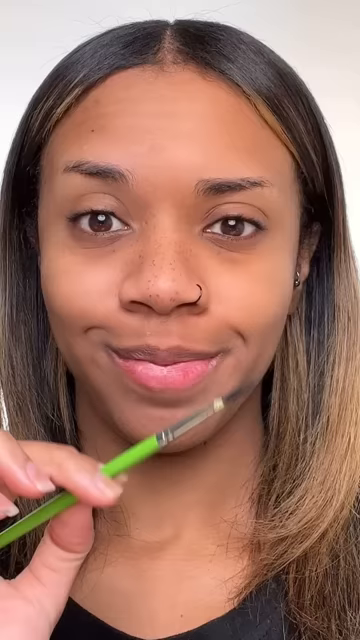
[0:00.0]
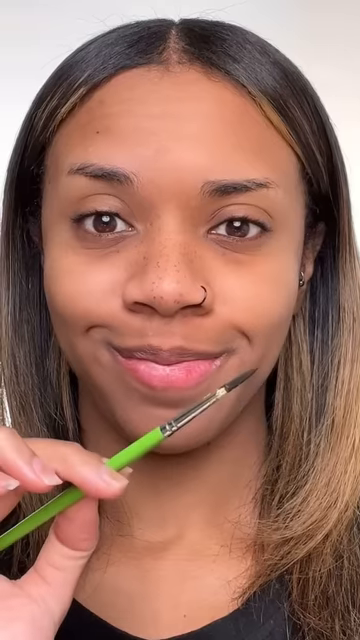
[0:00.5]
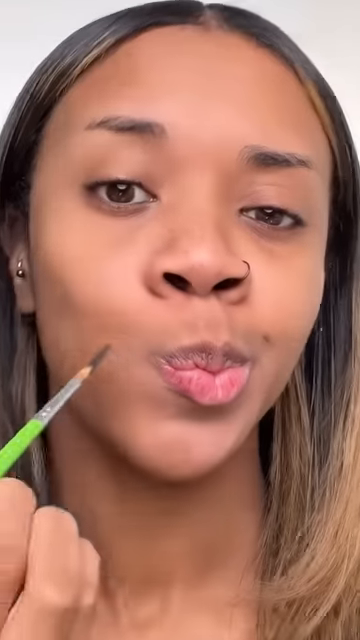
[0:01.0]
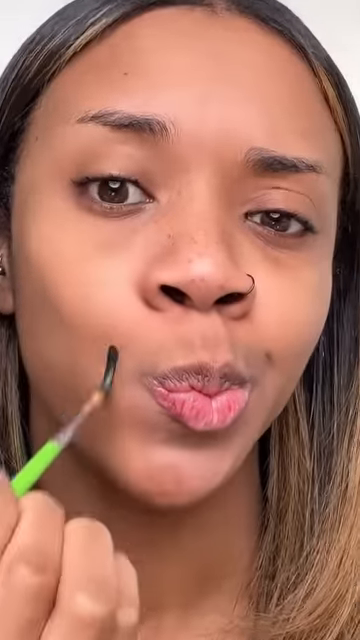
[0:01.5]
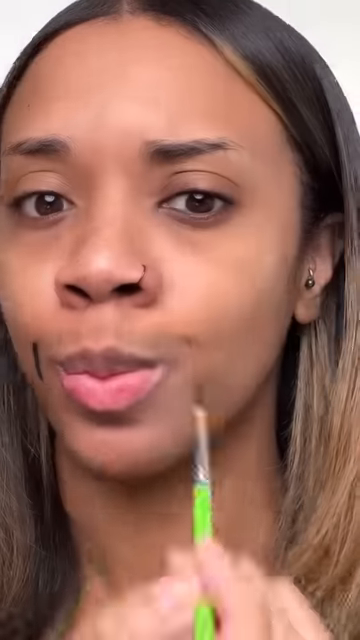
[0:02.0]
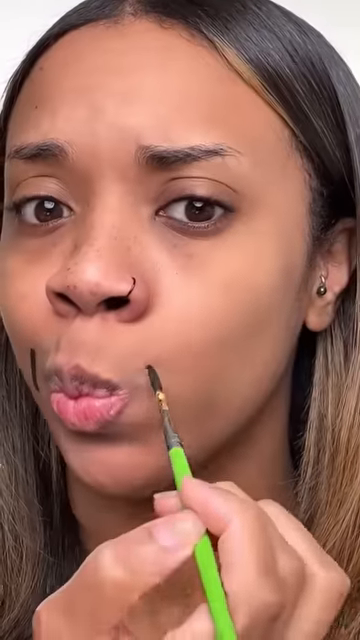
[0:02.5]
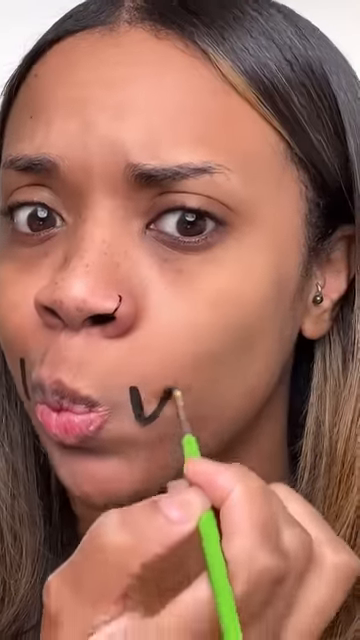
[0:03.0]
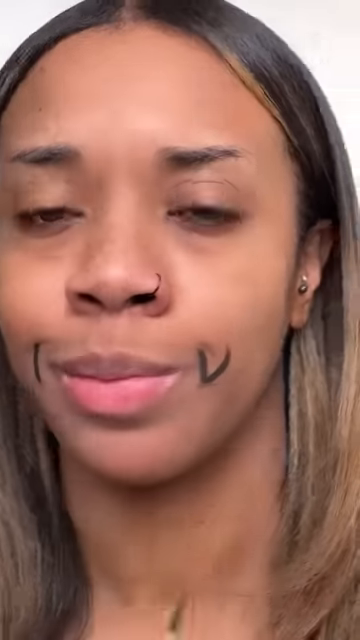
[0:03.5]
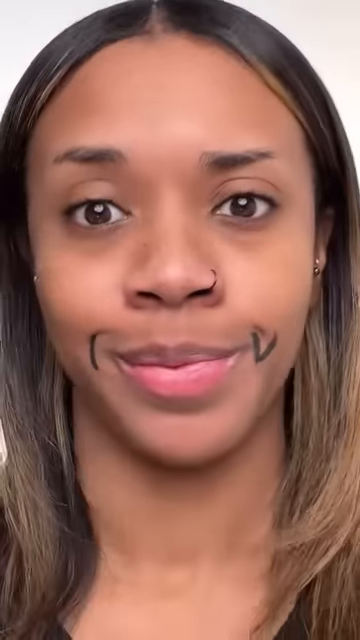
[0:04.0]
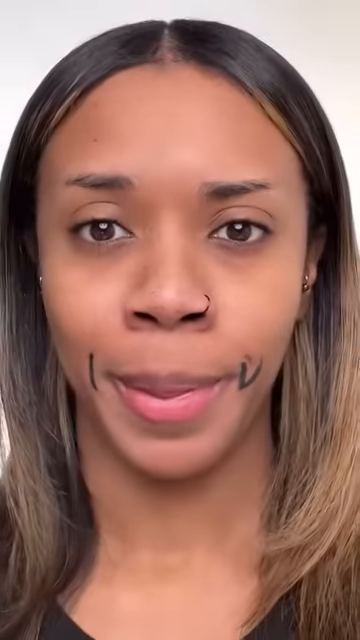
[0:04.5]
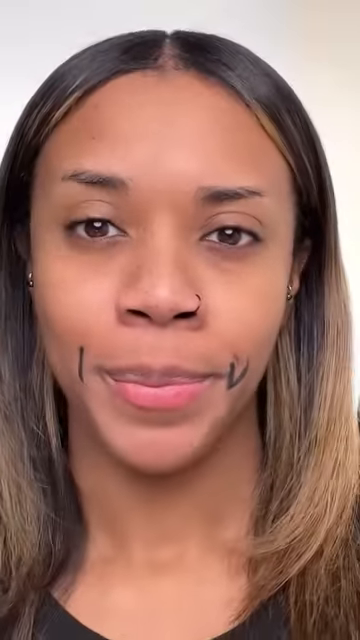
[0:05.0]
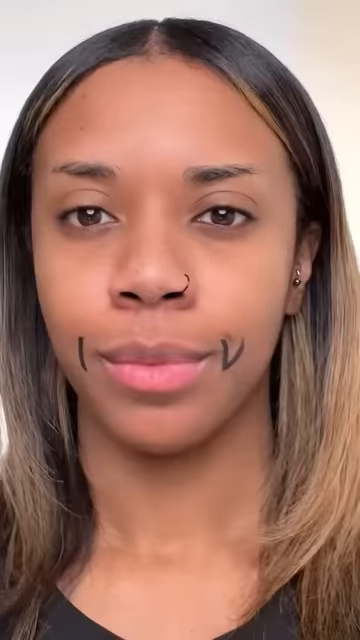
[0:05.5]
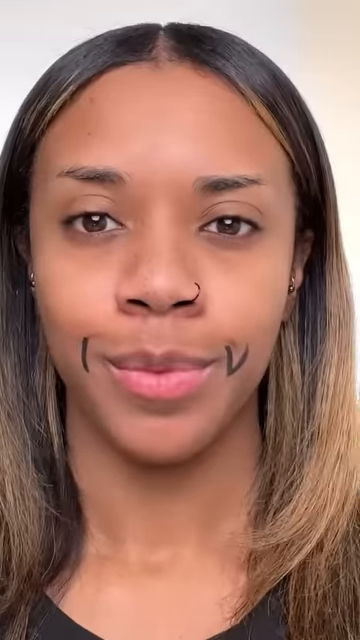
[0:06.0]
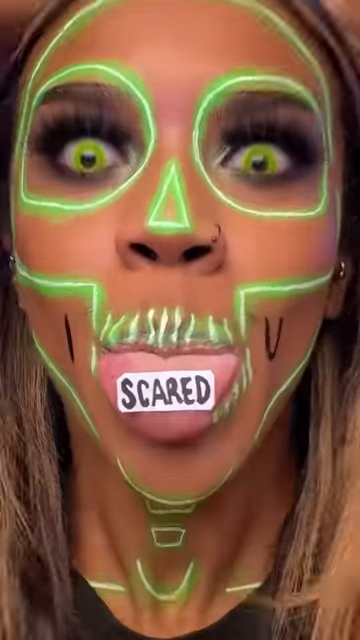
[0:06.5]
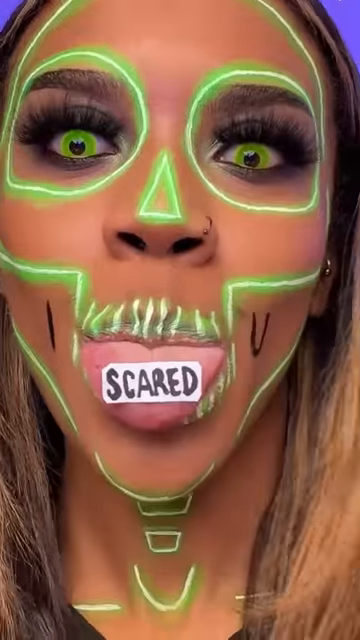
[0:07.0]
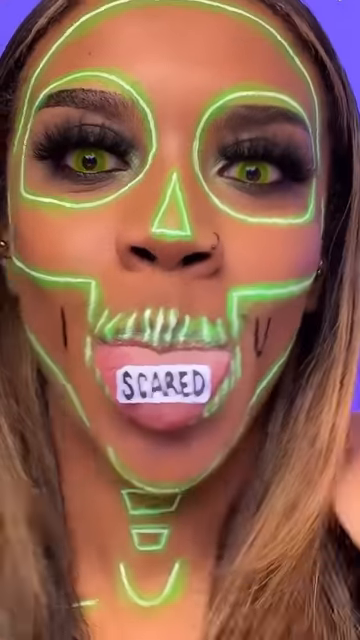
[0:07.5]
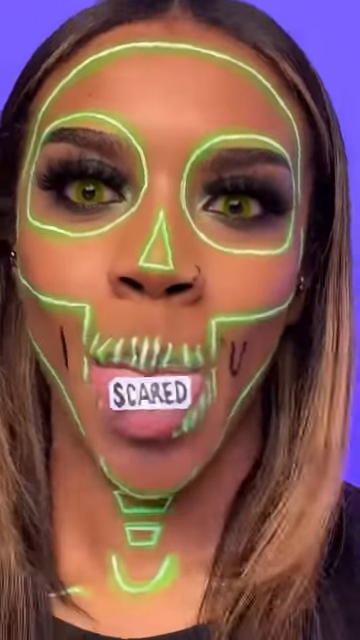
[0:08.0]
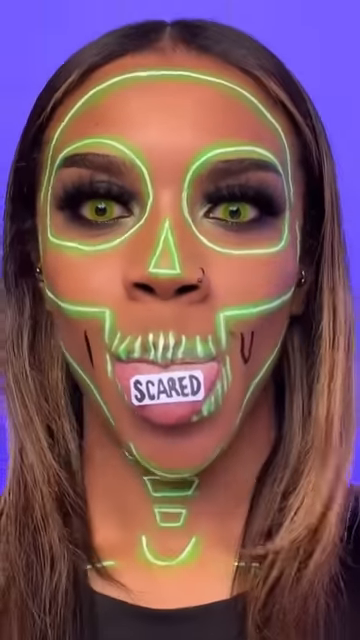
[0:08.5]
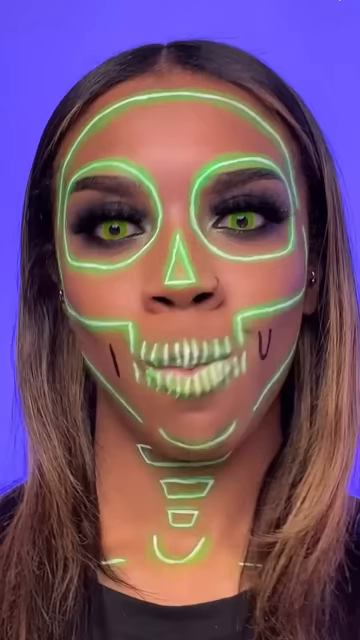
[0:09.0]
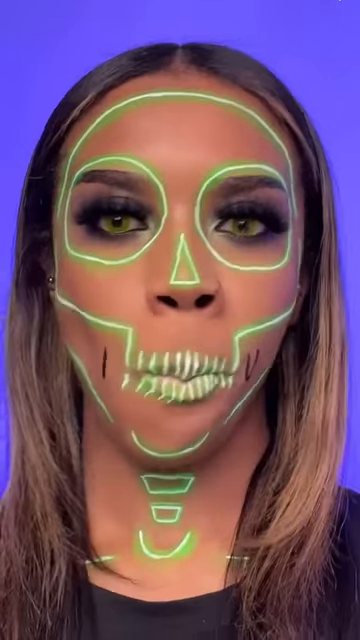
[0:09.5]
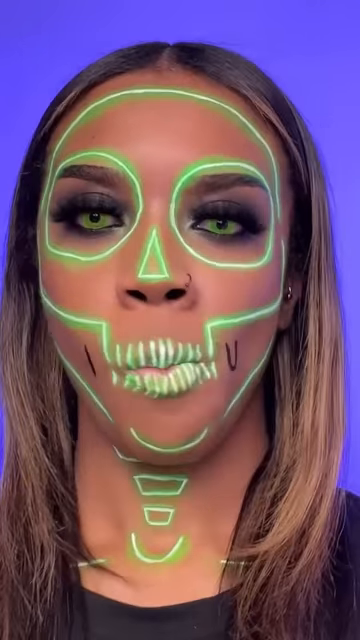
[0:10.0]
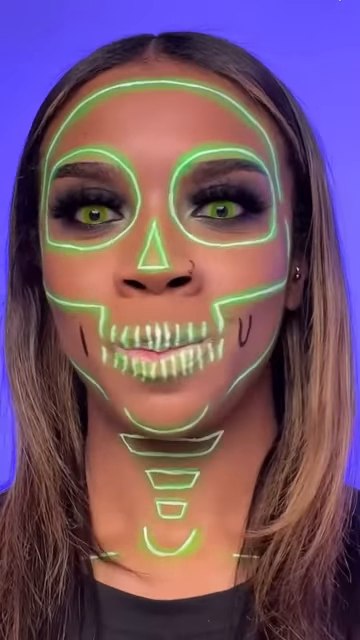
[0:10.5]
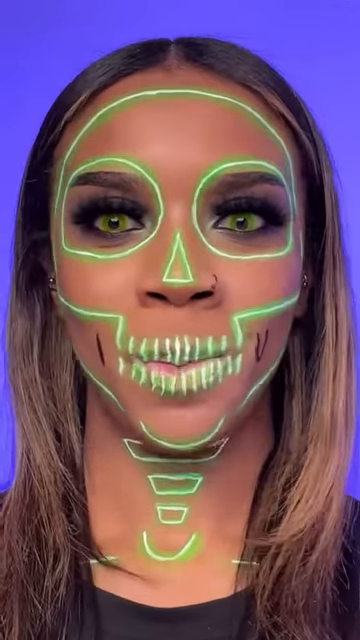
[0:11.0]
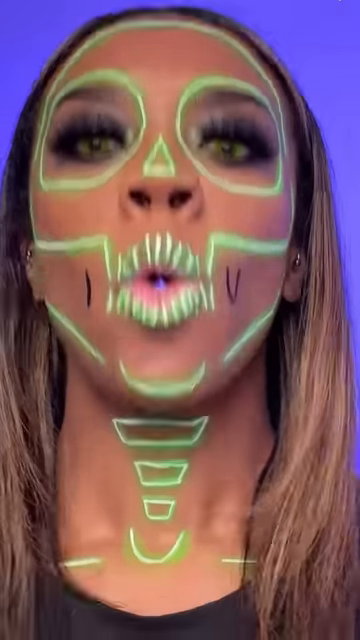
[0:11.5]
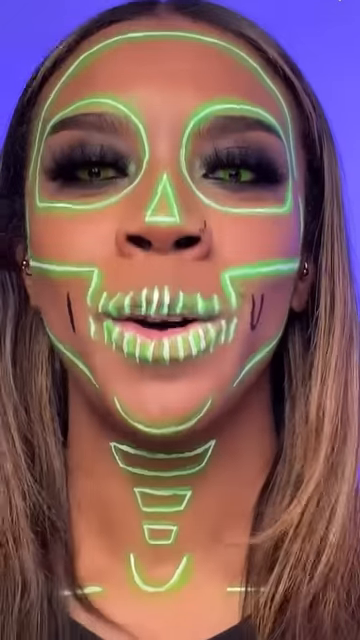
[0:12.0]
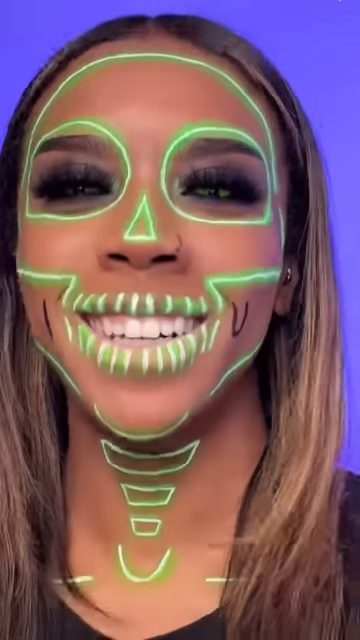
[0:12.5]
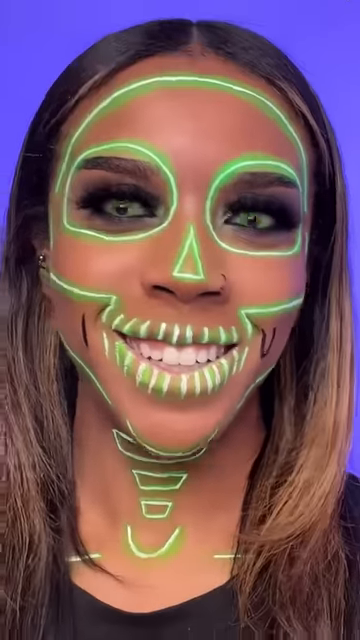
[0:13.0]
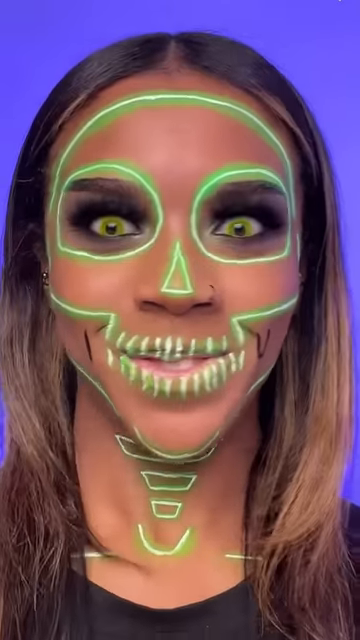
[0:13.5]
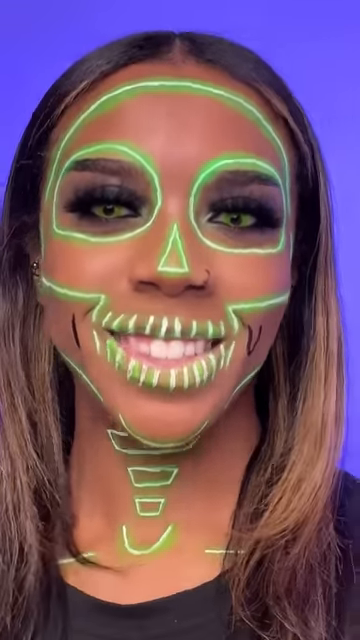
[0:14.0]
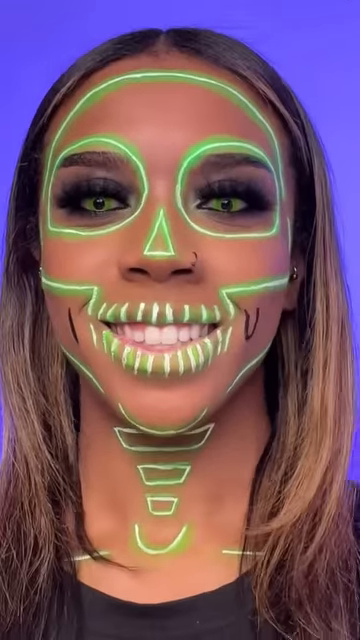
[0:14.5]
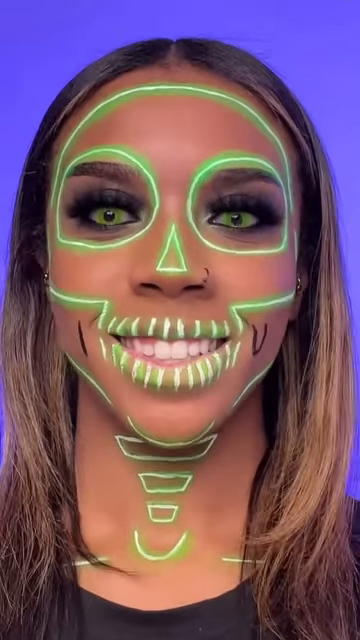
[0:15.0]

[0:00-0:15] Titled I scared you, this is a Halloween 2022 clip. It opens on a snapshot of a young woman with brownish-blonde hair wearing some kind of purple cap over her head. She has green markings on her face and neck that seem to be fluorescent: large circles drawn around each eye, a scarecrow-type triangle nose, and horizontal lines leading from under her cheekbones down to her lips, creating stripes all around the lip area. On her neck there are three rectangles drawn, with perhaps a smiley face at the bottom. The woman is a beautiful African American woman, and her unpainted face is shown. She shows how much she enjoys painting her face, starting with a paintbrush and some dark paint, and then the finished product appears very quickly. Her smile shows that she loves this and finds it fun. She makes her eyes big and smiles, looking very happy, even though the word "scared" pops out; the word is taped or somehow attached to her tongue. Despite the creepy features she adds to her face, she is very attractive and the effect is funny. Her eye makeup is more conventional, with strong brows and lashes serving as a foundation and backdrop for the crazy look, which she flaunts by jutting her head back and forth the way a skeleton might move.